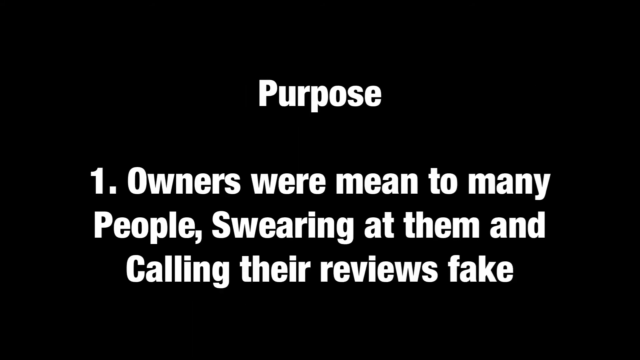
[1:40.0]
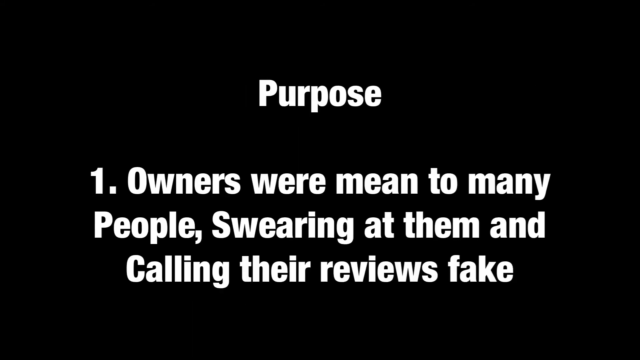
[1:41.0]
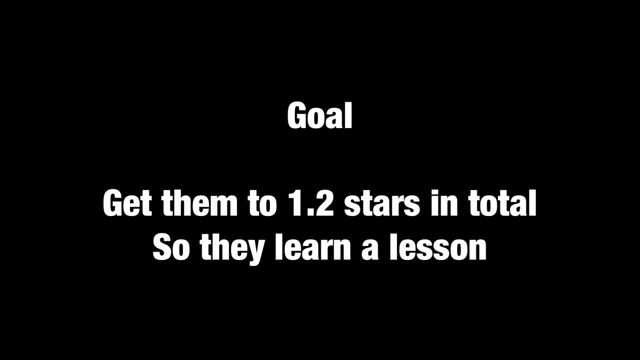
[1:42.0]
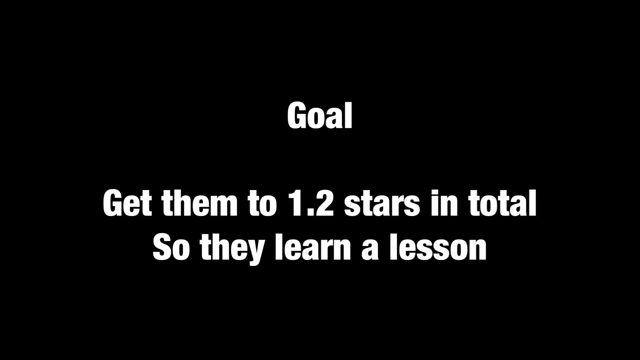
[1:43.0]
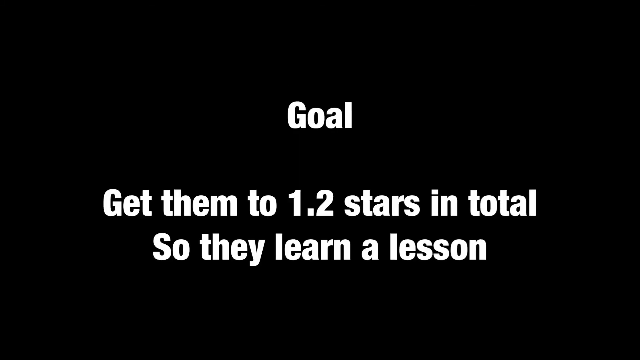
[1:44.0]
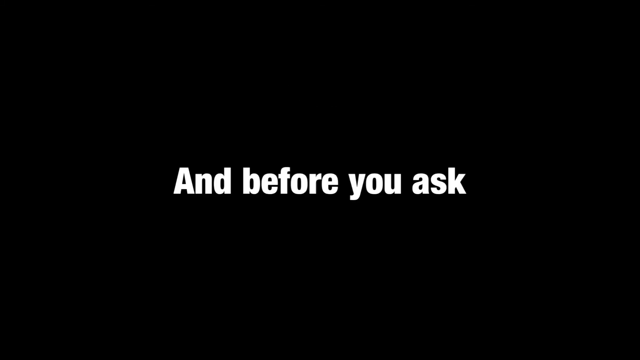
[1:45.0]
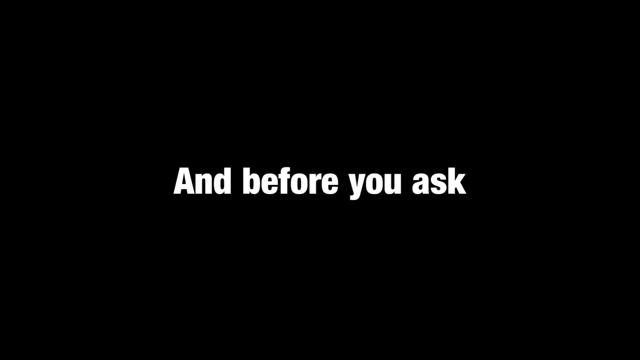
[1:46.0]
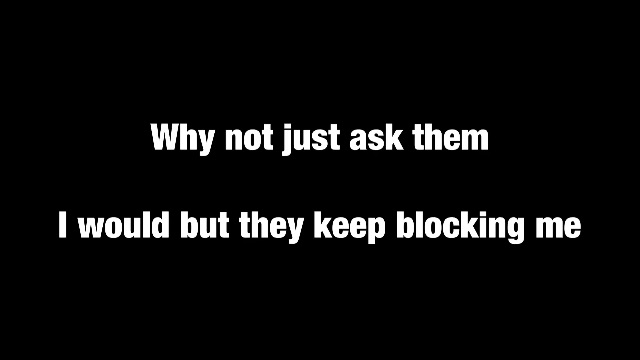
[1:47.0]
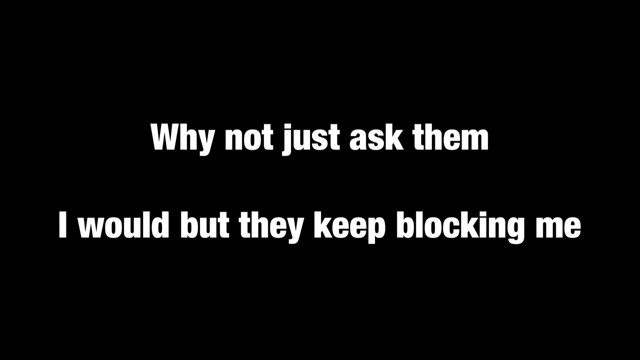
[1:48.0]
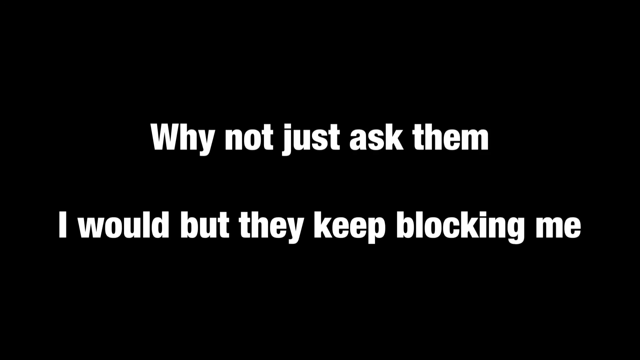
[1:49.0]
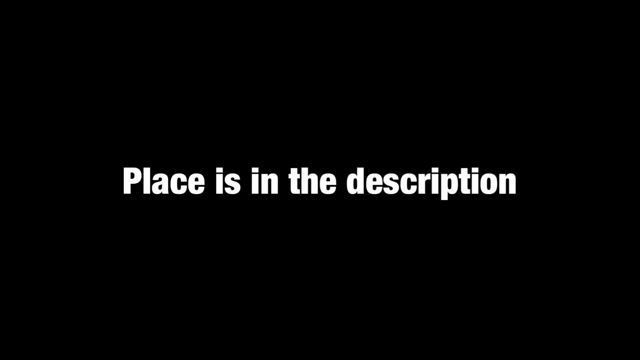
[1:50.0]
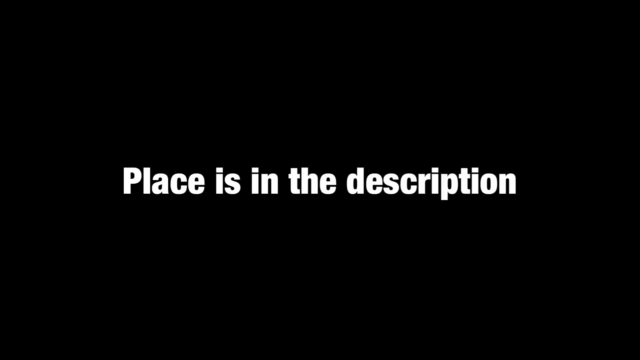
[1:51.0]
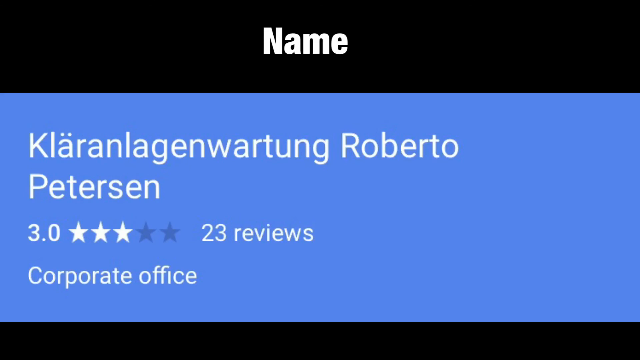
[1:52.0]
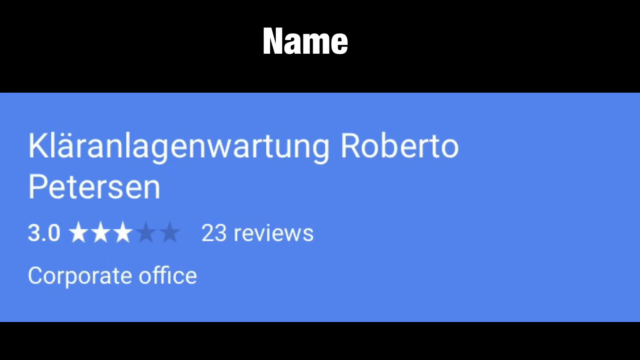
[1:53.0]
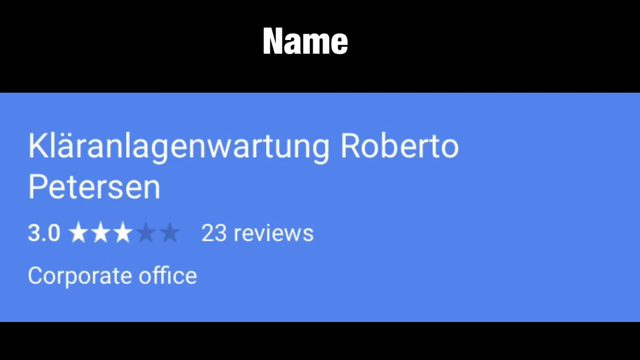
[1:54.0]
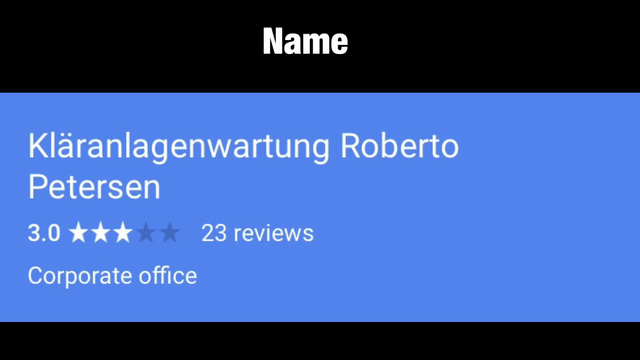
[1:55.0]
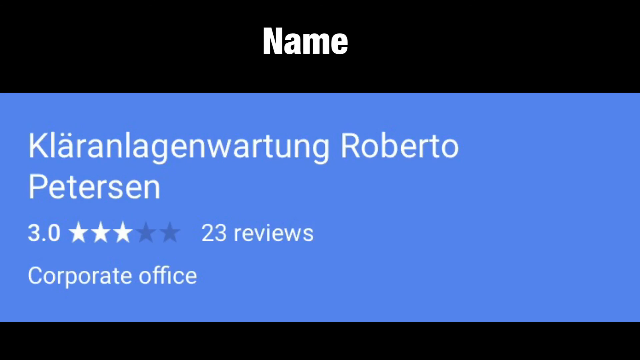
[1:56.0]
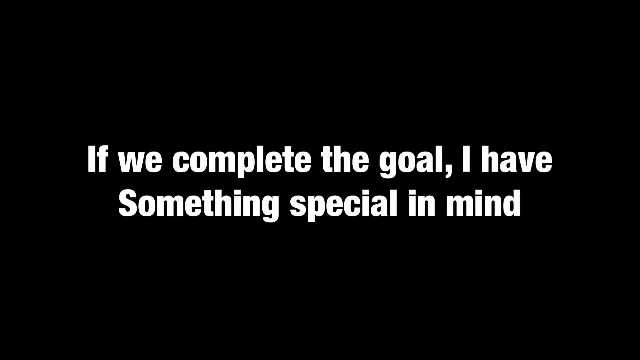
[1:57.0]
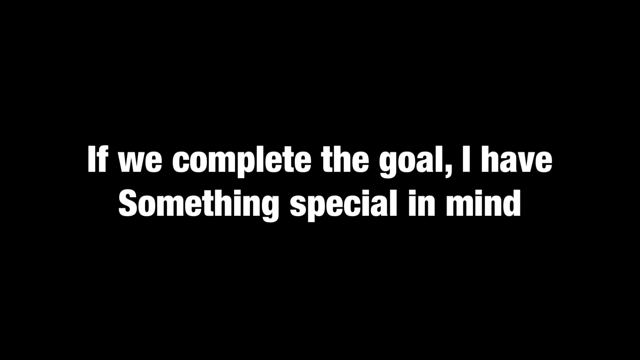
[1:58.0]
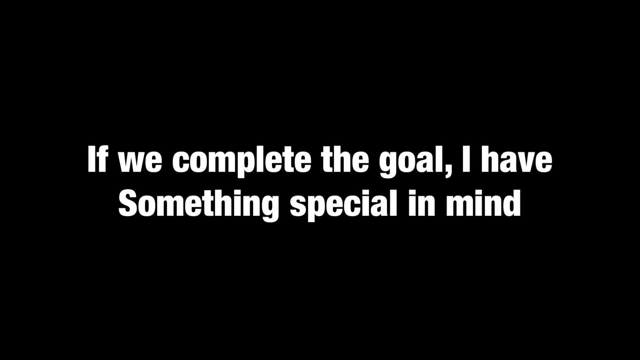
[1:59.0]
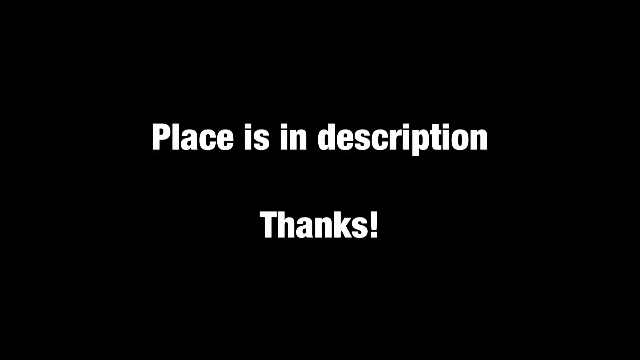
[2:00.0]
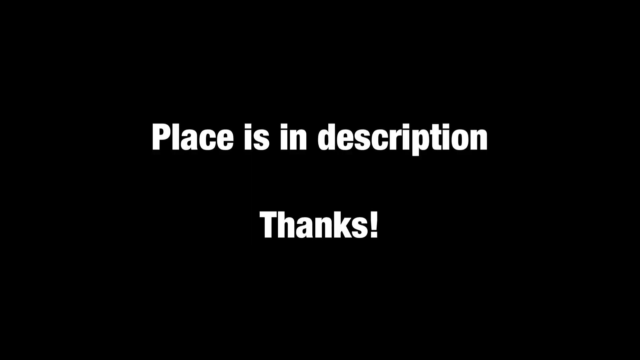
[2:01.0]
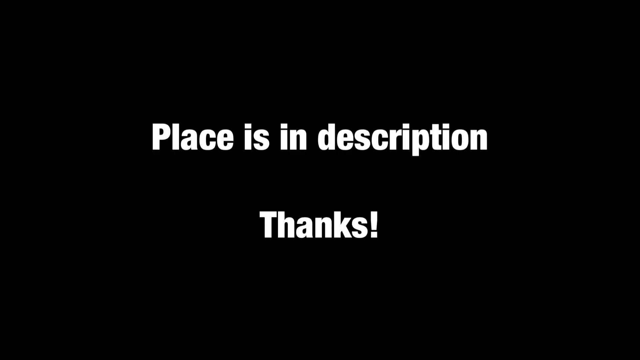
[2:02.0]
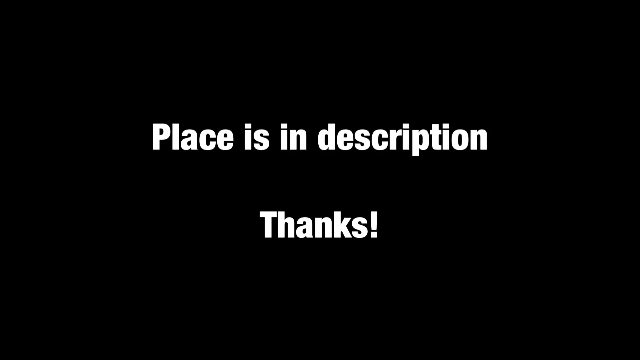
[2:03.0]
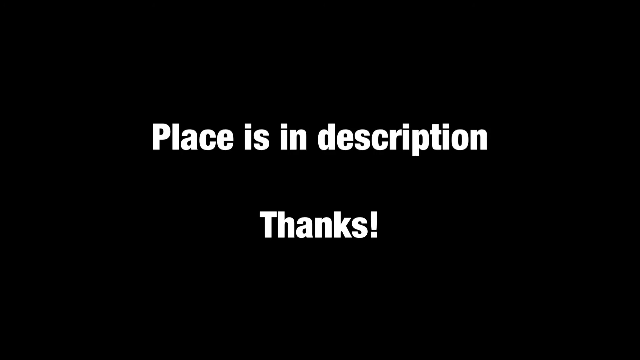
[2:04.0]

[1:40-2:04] White text on a black background continues the message about people "swearing at them and calling their reviews fake". The text then transitions to "go, get them to 1.2 stars in total so they learn a lesson", followed by "before you ask" and "why not just hack them? I would be, but they keep blocking me.", all in white on a black background. A name appears centered in white on a black background, and below it a banner with a light blue background shows the name "Roberto Peterson" in white, with 3.0, three out of five stars, "23 reviews" and "corporate office" in white. Further text on a black background reads "if we complete the goal, I have something special in mind", and the video ends with "places in the description. Thanks." in white on a black background.